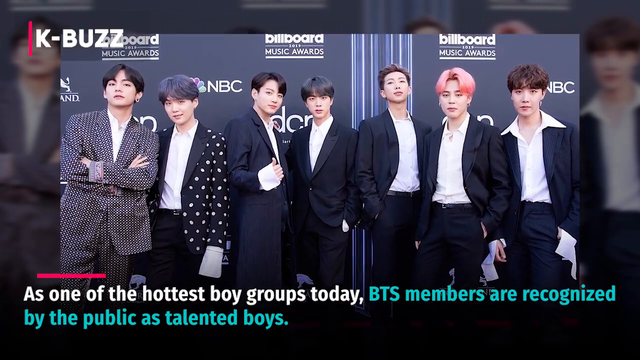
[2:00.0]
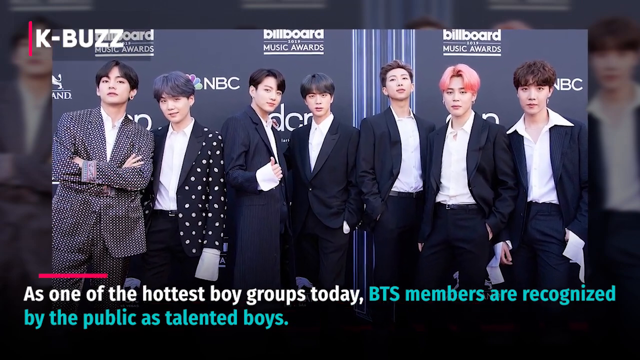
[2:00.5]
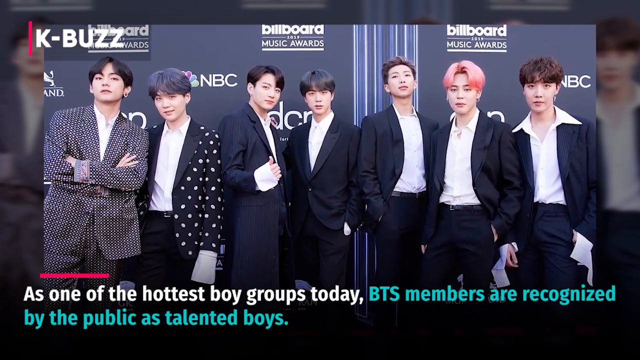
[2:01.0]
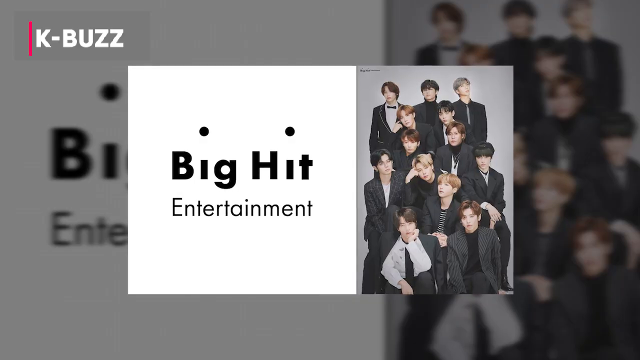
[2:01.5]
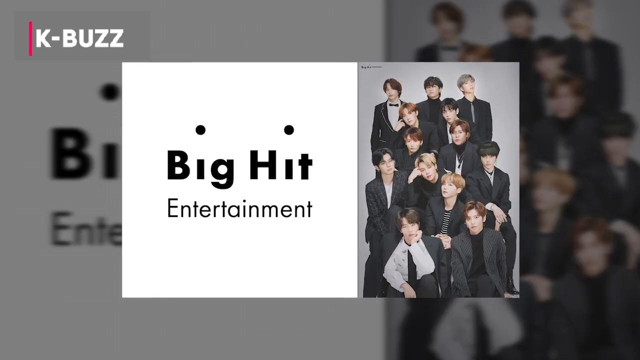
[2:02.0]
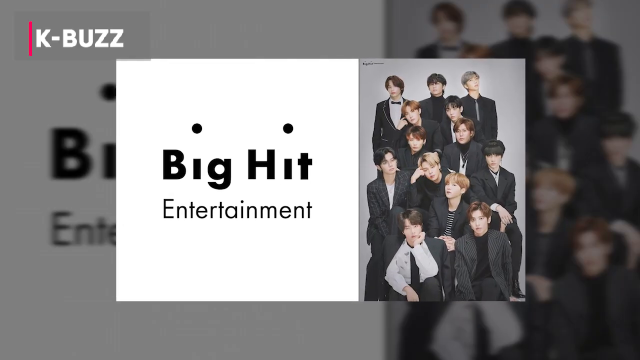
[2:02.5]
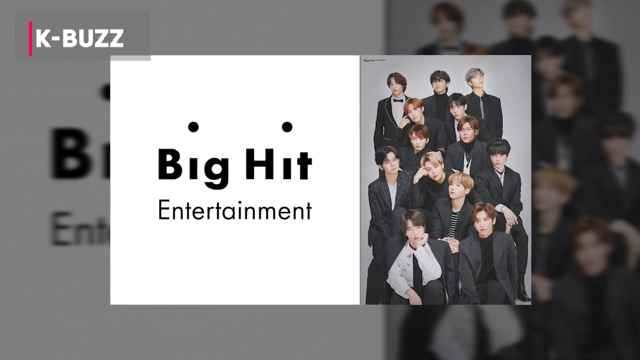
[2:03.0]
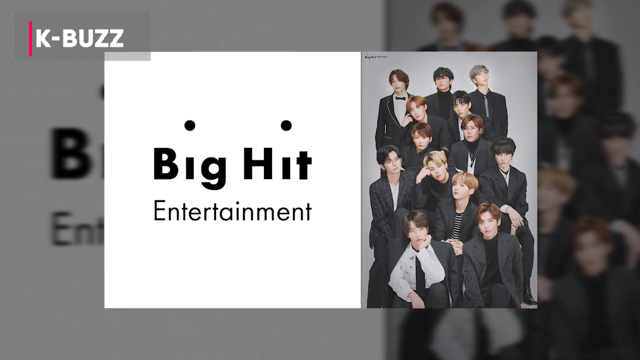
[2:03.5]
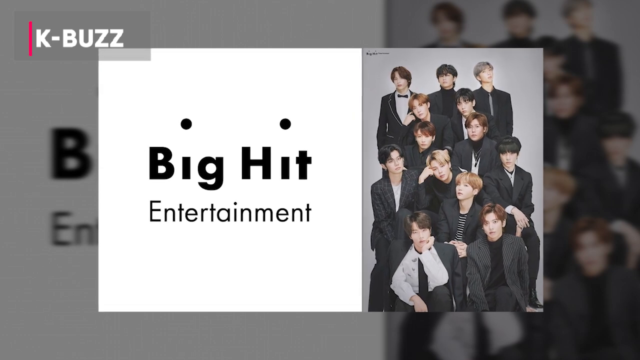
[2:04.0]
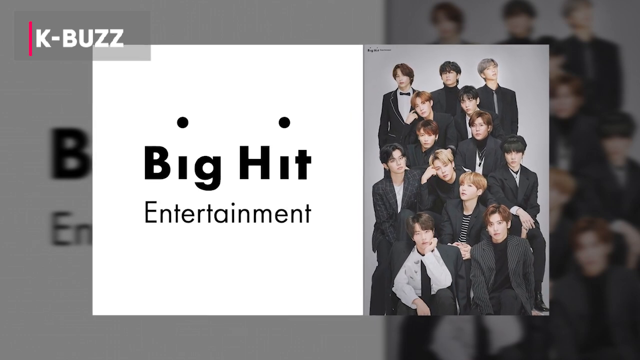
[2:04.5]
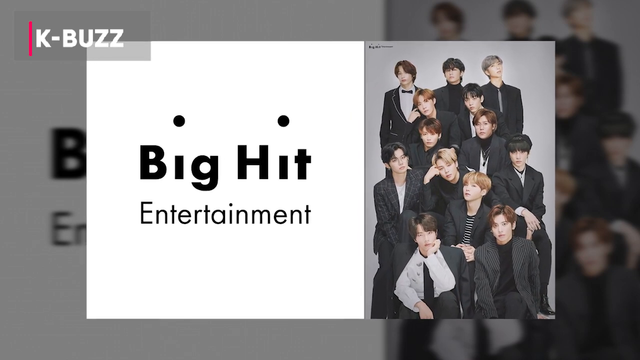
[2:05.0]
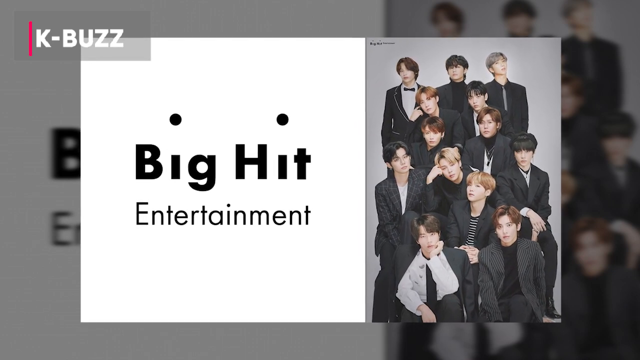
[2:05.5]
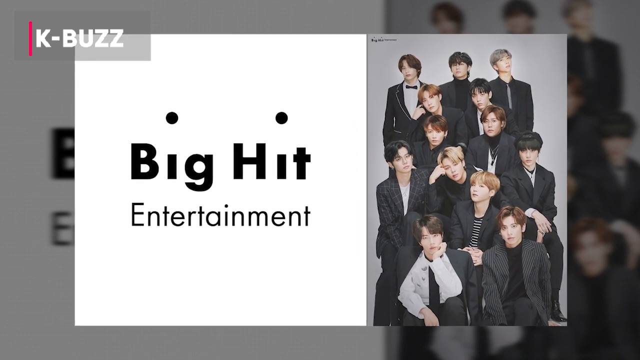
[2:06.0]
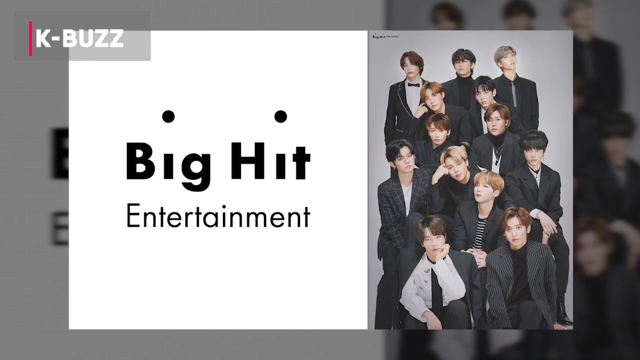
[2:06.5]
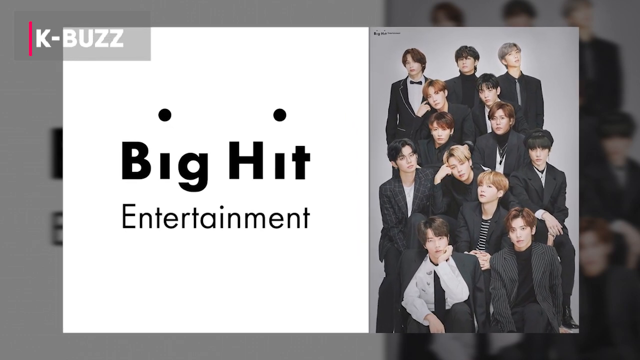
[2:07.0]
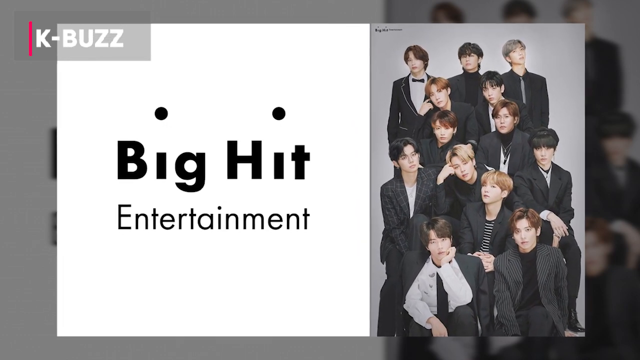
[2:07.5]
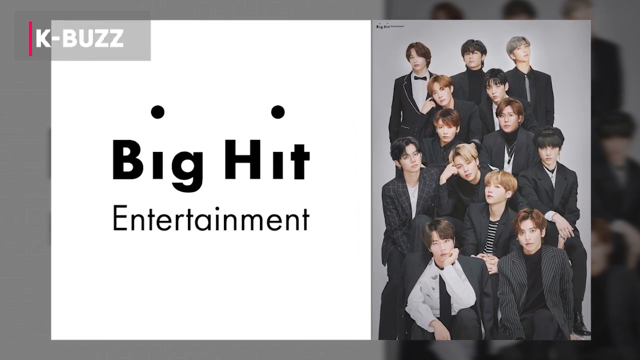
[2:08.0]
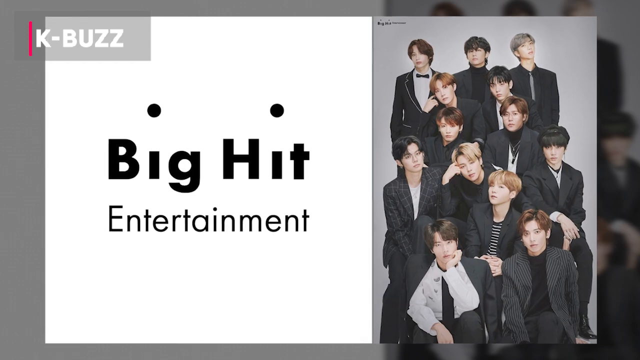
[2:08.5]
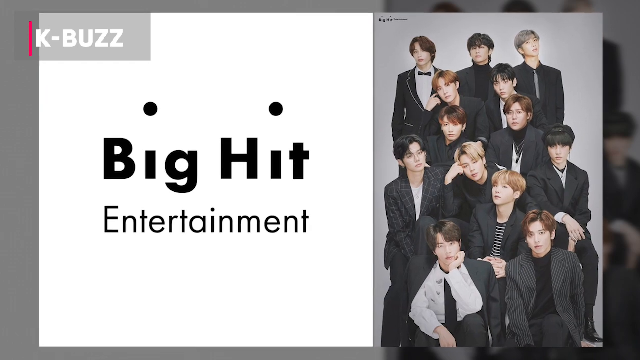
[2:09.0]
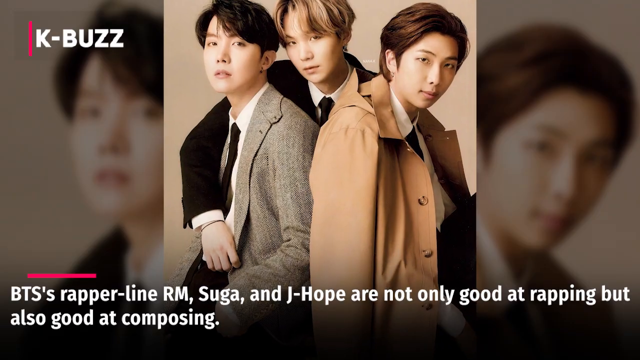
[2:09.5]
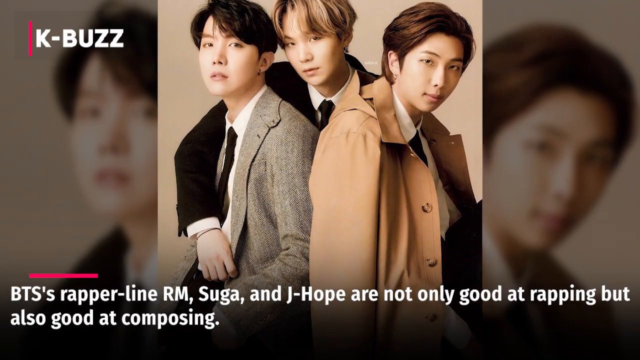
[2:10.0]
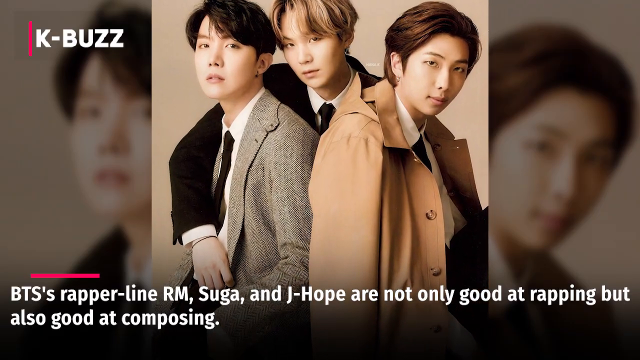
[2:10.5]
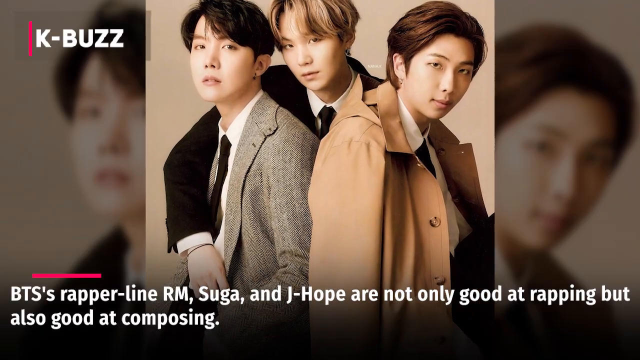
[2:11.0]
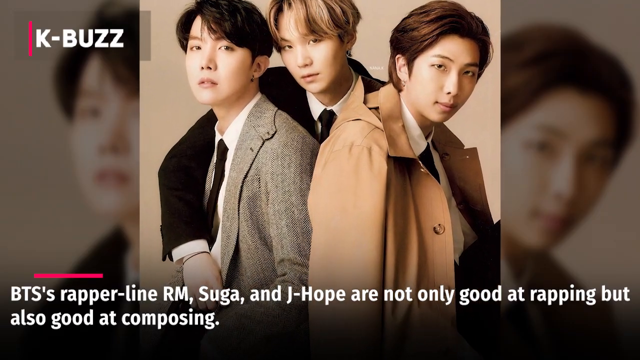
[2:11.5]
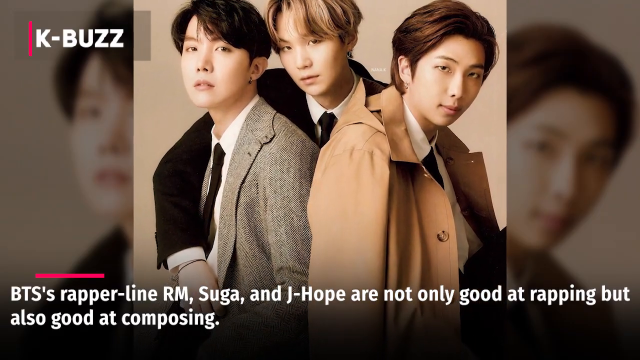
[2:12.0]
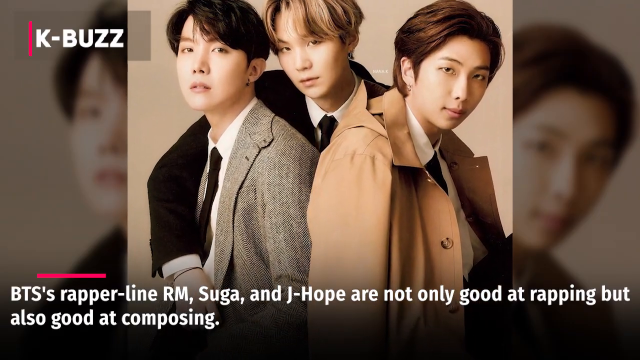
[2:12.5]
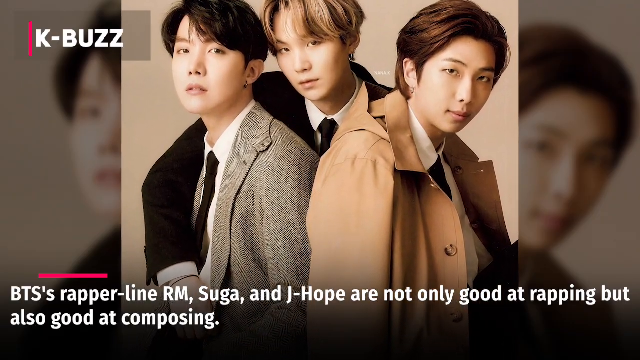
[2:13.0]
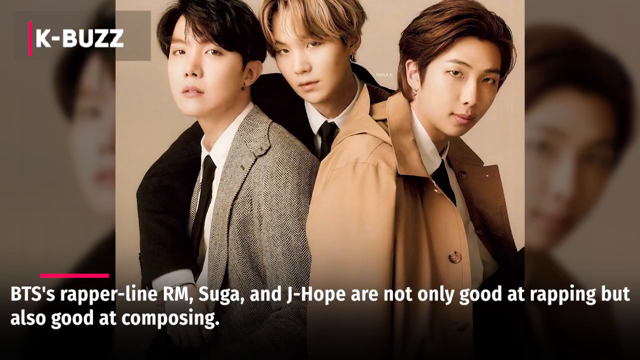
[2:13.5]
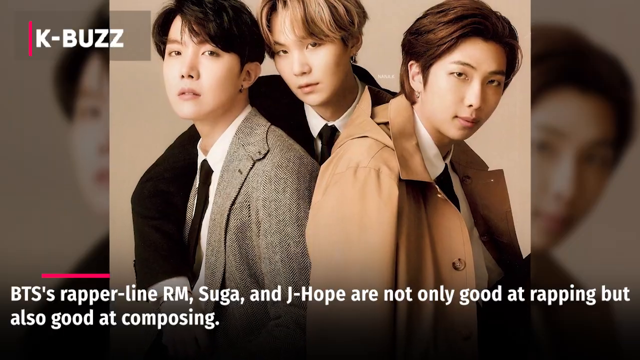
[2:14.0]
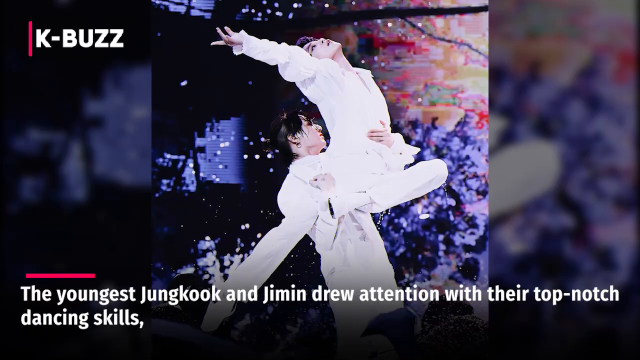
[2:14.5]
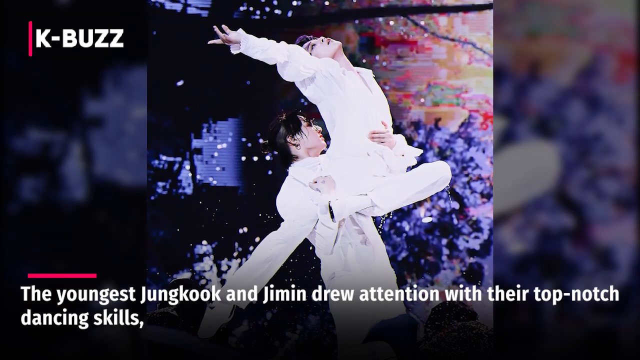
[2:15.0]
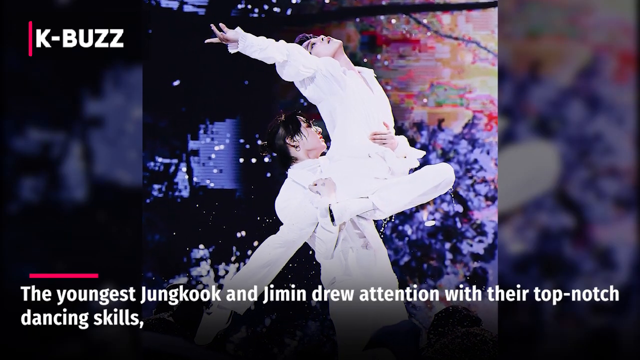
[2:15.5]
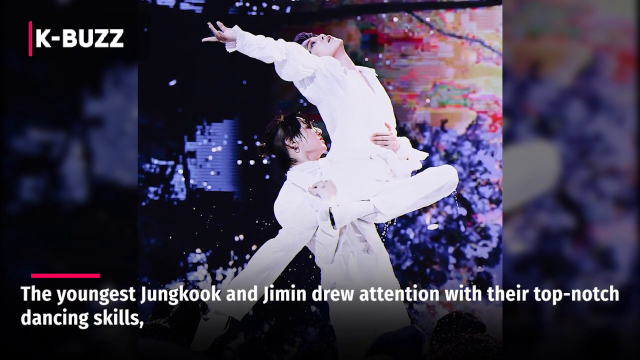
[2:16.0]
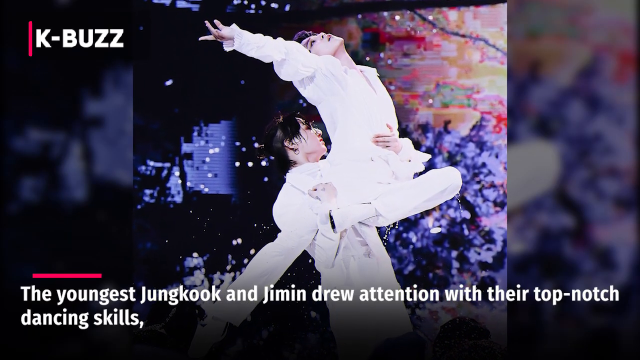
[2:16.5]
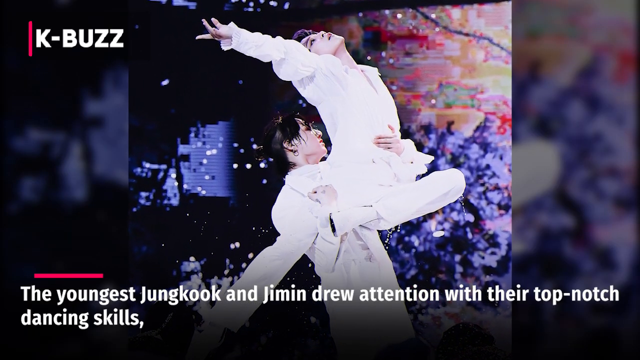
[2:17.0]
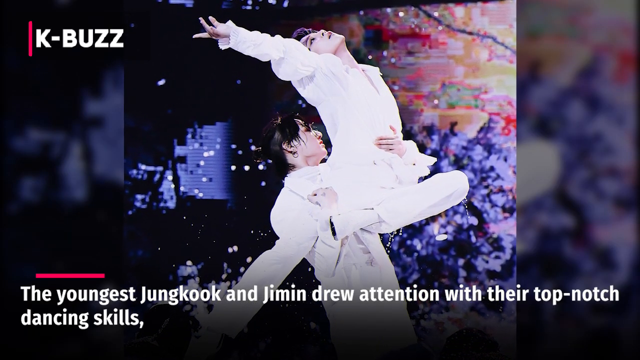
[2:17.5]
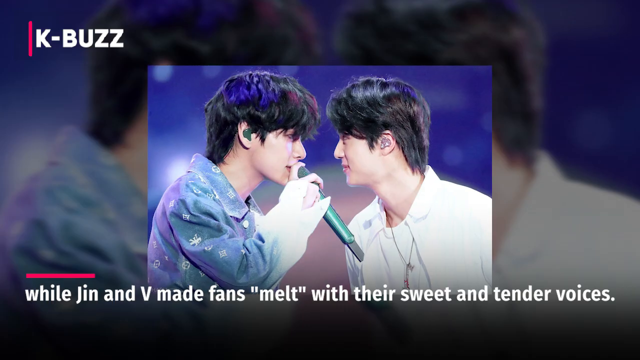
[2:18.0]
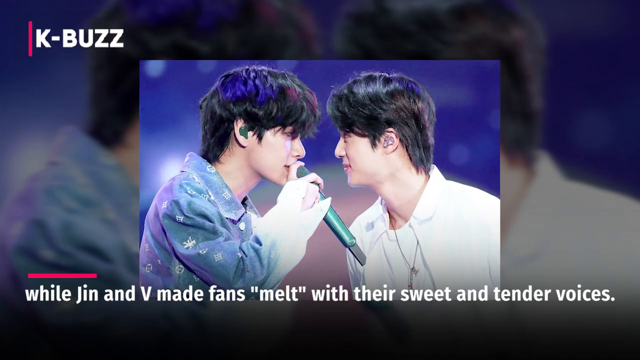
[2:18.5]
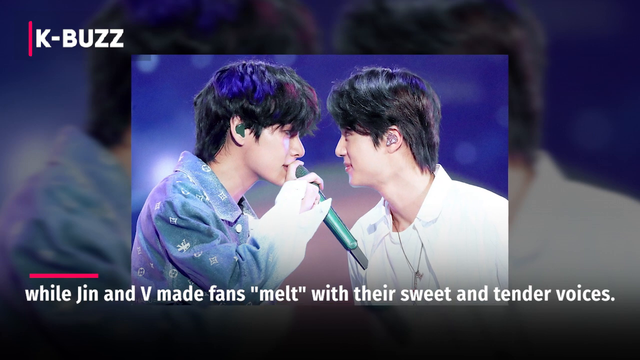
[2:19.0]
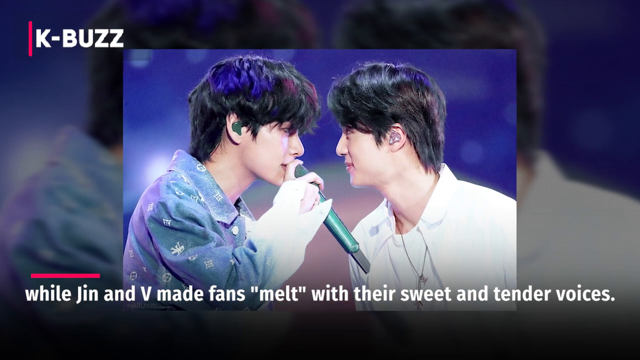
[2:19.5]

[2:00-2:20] The photo of the seven BTS members on the red carpet at a live event continues. All seem to wear black suits with white shirts. The one at the far left has a black suit with very small white polka dots; the one next to him has a black blazer with white polka dots; the third from the left has a longer blazer; and the one in the middle and the three to the right have a more similar style of suit, with different colors and shirts. Next is a promotional photo of the 13 members on the right, covering a third of the frame, while the other two thirds show the name "Big Hit Entertainment" in black letters on a white background. A picture of three of the members follows, all in suits, white collared shirts and black ties, with different colored jackets: a gray blazer on the left, a black blazer in the center and a tan blazer on the right. Beneath is the text "BTS's rapper line RM, Suga, and J-Hope are not only good at rapping, but also good at composing." Another picture shows Jungkook and Jimin on stage dressed in white, one carrying the other in a ballet-style pose, with the text "The youngest, Jungkook and Jimin, drew attention with their top-notch dancing skills" at the bottom. Finally, a picture of two more members shows them standing very close, face to face, inches apart and looking into each other's eyes; the one on the left has a microphone and the one on the right does not. The text underneath reads "while Jin and V made fans melt with their sweet and tender voices."